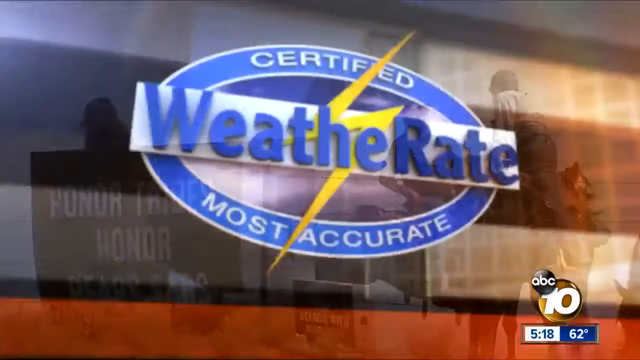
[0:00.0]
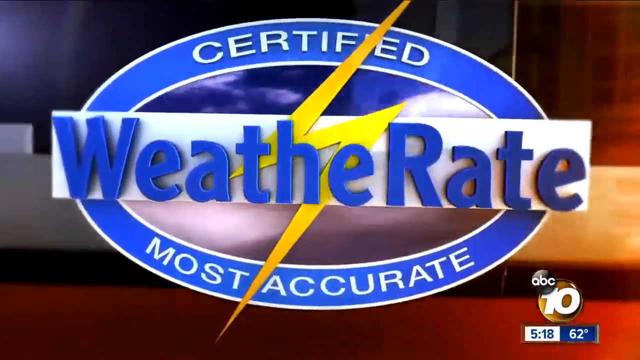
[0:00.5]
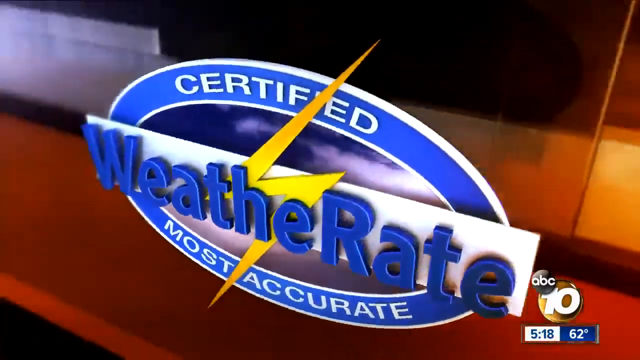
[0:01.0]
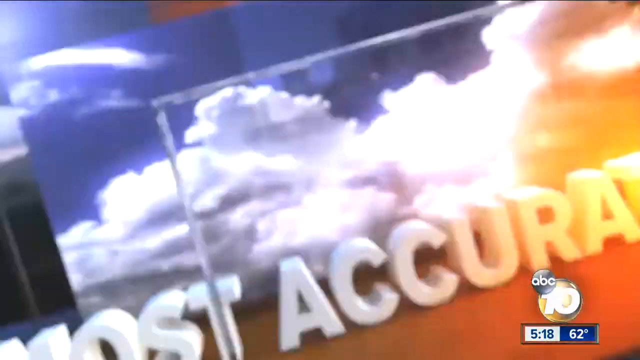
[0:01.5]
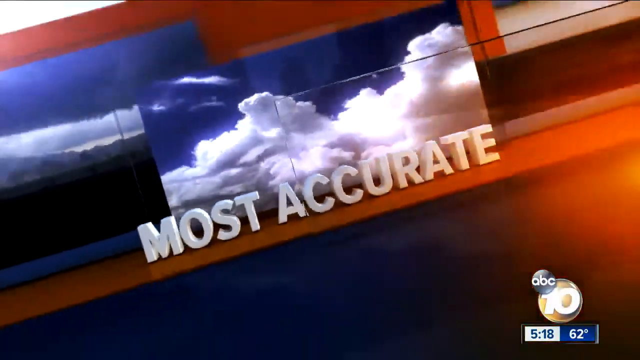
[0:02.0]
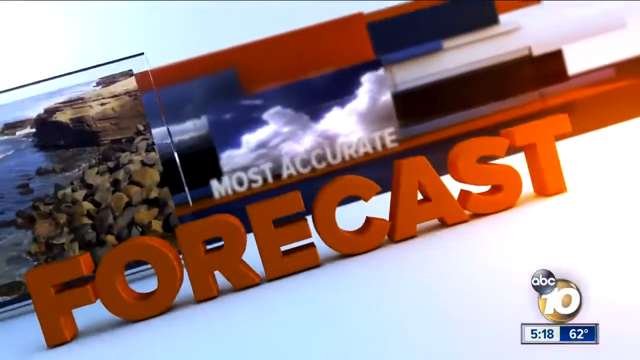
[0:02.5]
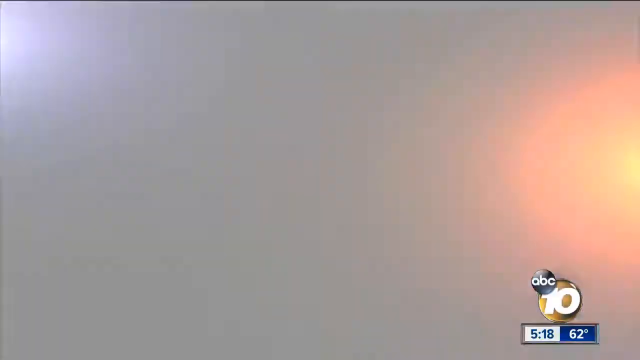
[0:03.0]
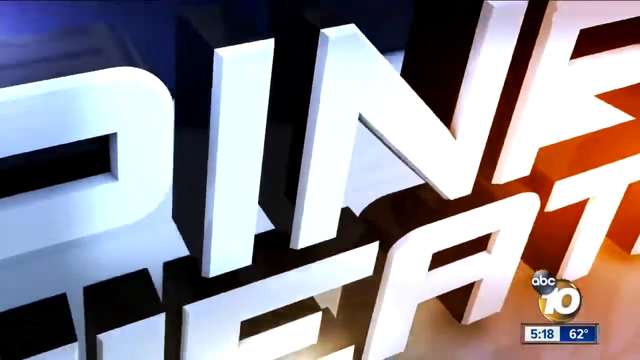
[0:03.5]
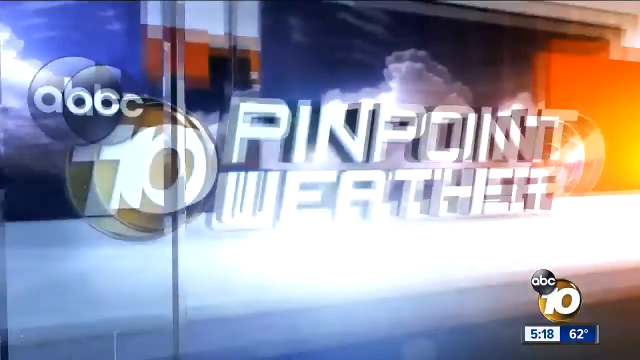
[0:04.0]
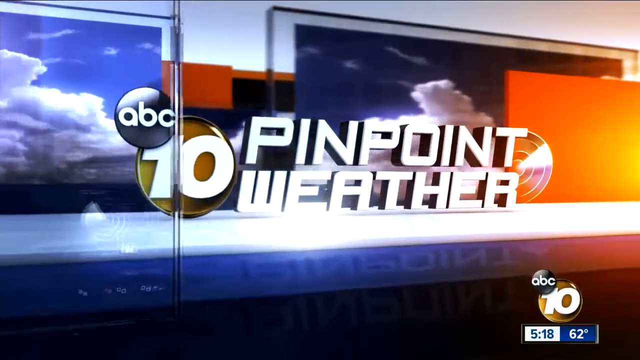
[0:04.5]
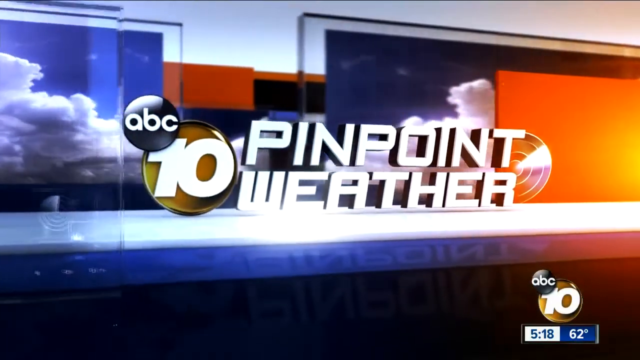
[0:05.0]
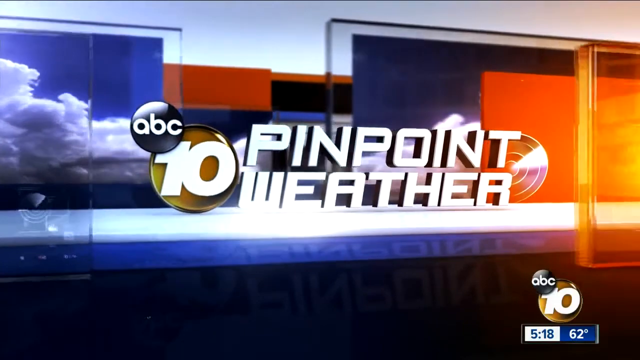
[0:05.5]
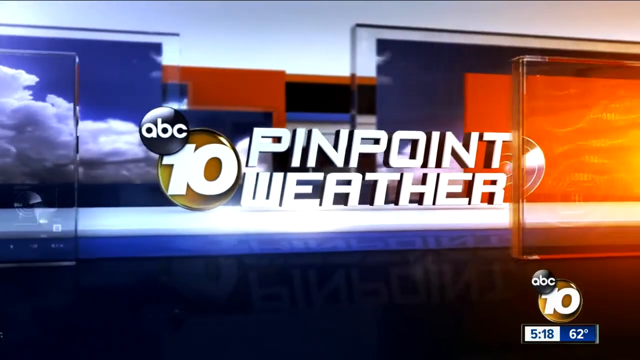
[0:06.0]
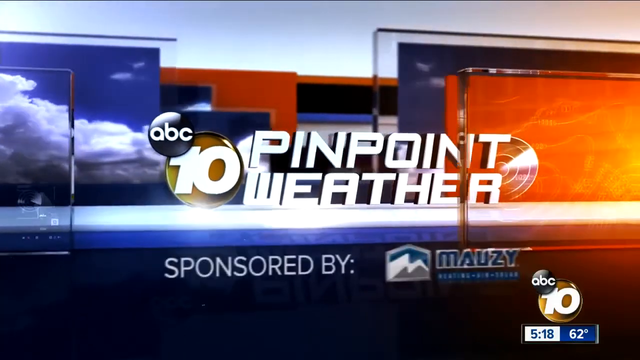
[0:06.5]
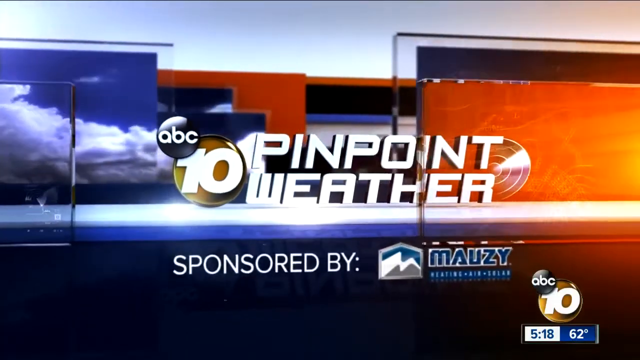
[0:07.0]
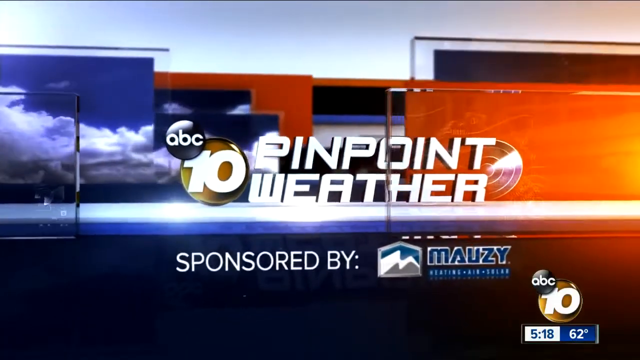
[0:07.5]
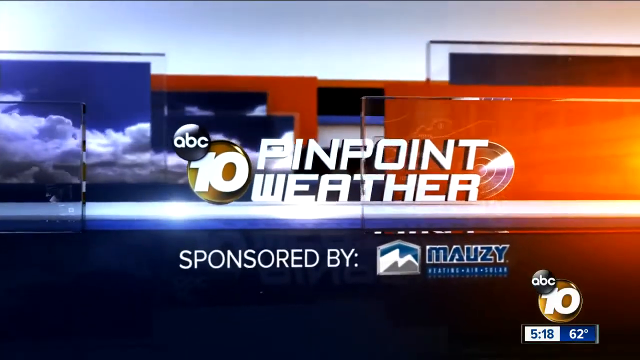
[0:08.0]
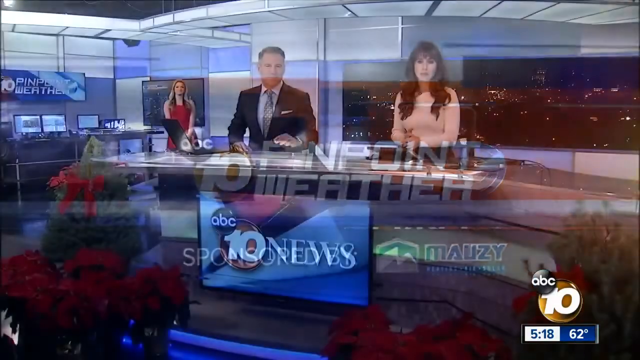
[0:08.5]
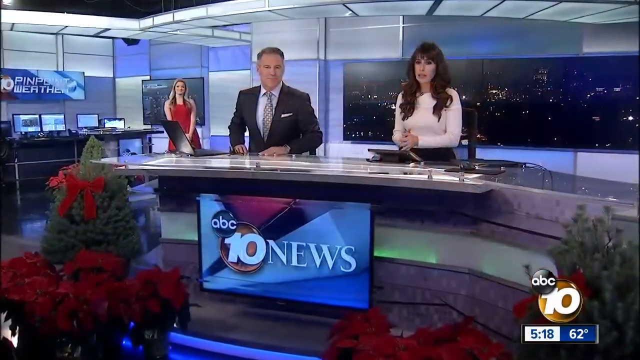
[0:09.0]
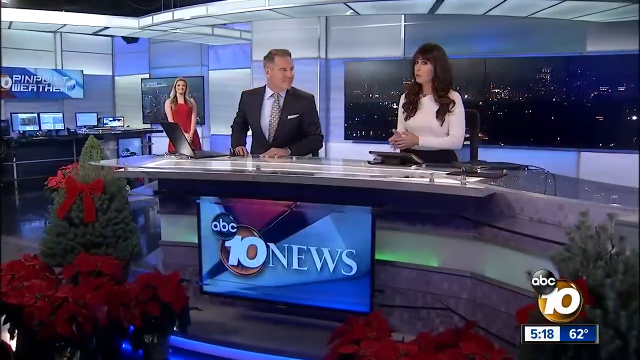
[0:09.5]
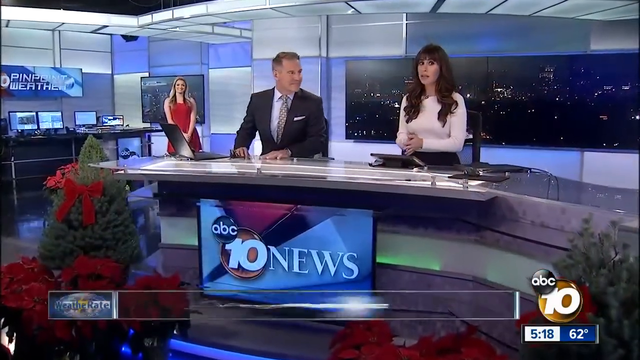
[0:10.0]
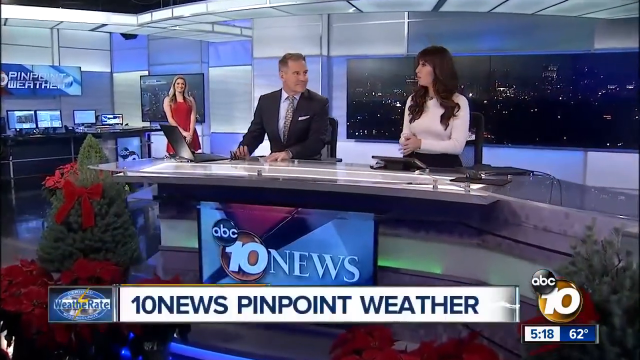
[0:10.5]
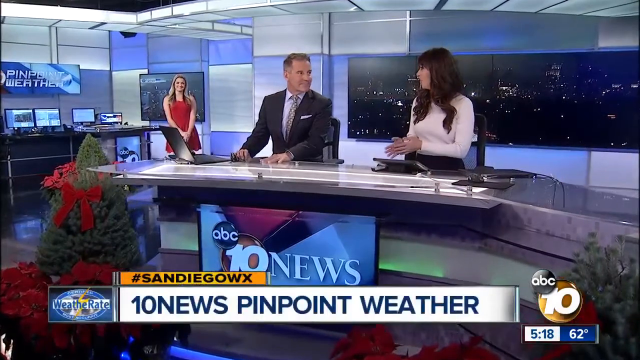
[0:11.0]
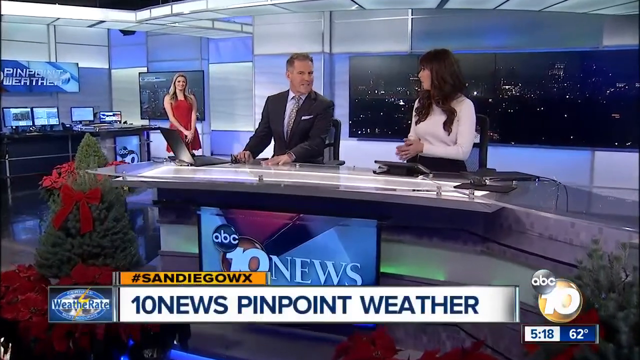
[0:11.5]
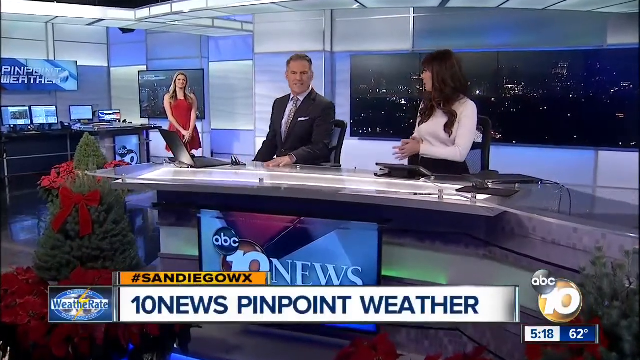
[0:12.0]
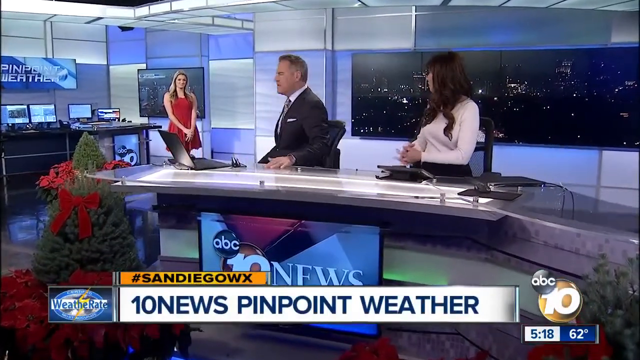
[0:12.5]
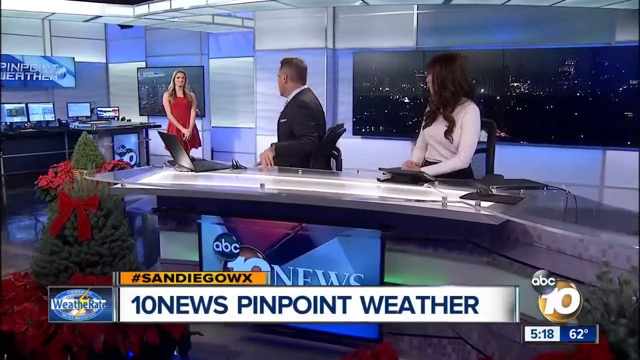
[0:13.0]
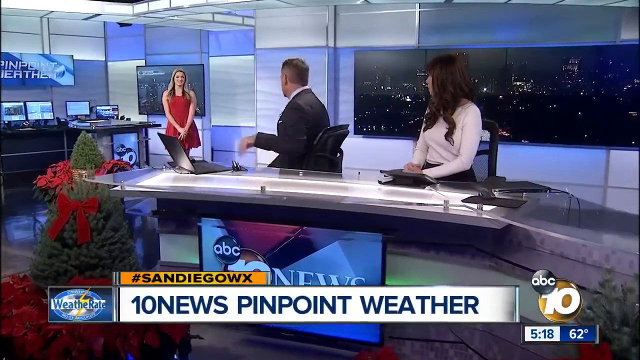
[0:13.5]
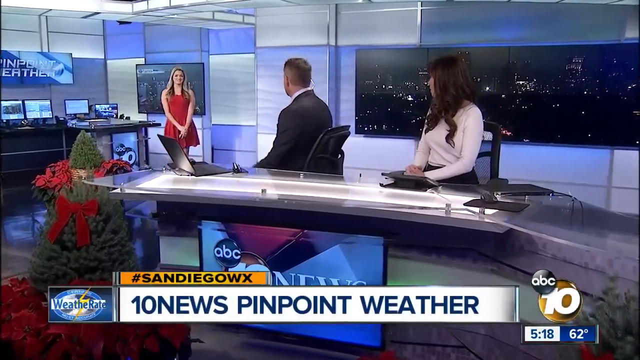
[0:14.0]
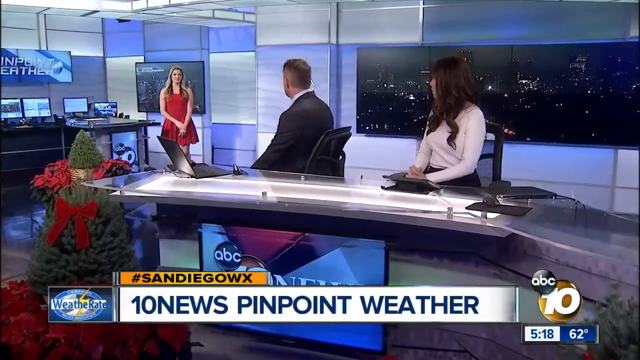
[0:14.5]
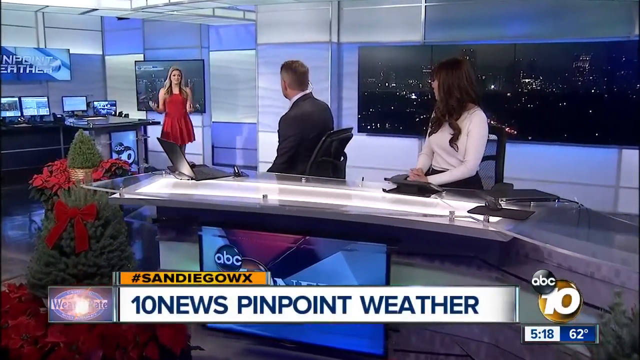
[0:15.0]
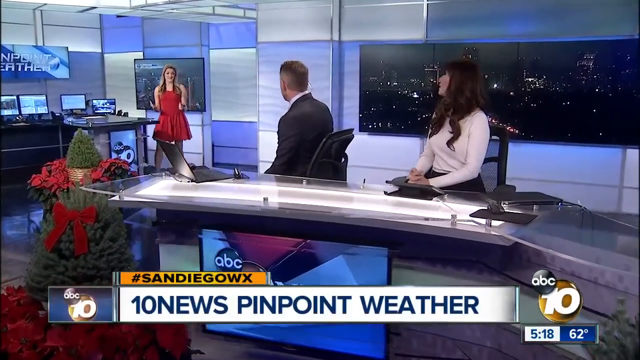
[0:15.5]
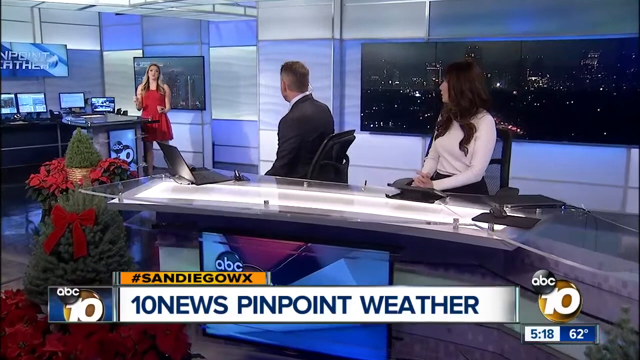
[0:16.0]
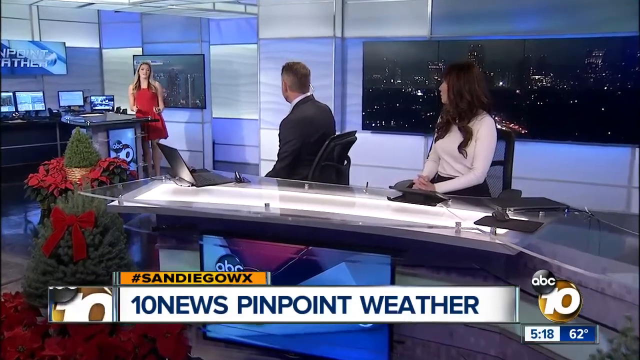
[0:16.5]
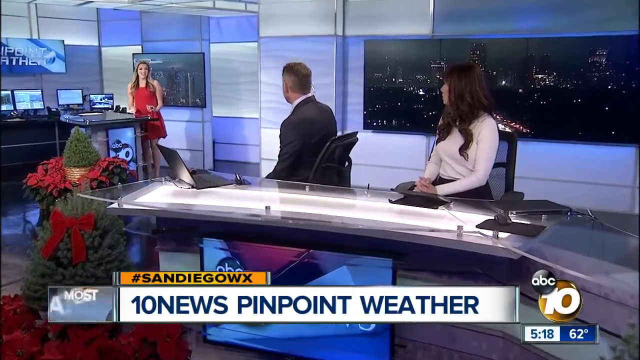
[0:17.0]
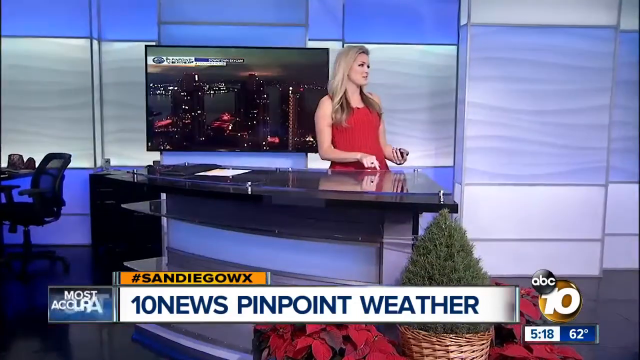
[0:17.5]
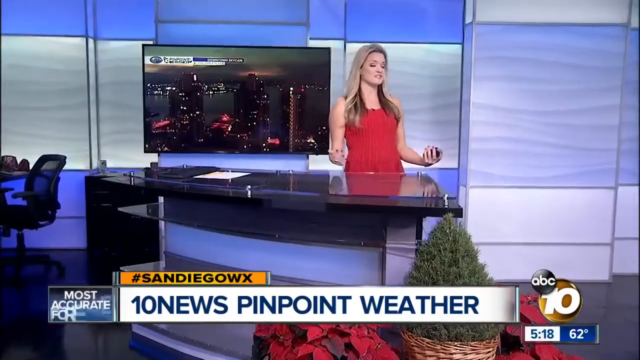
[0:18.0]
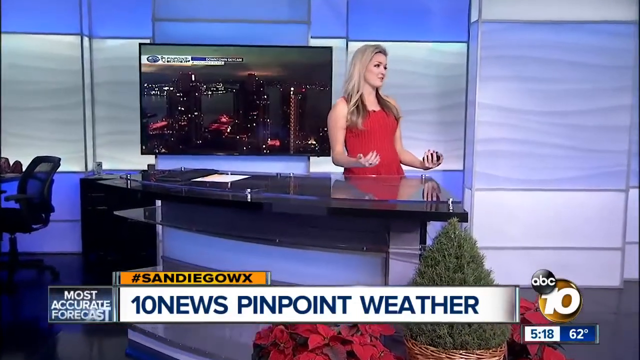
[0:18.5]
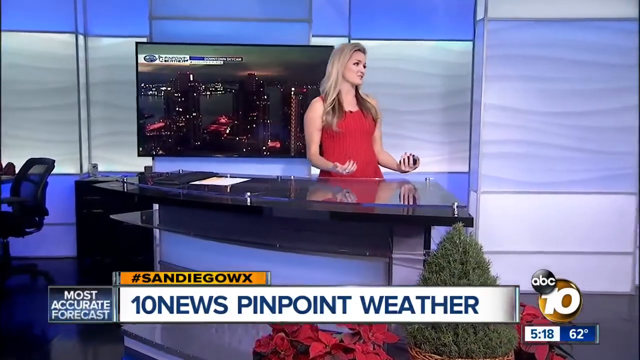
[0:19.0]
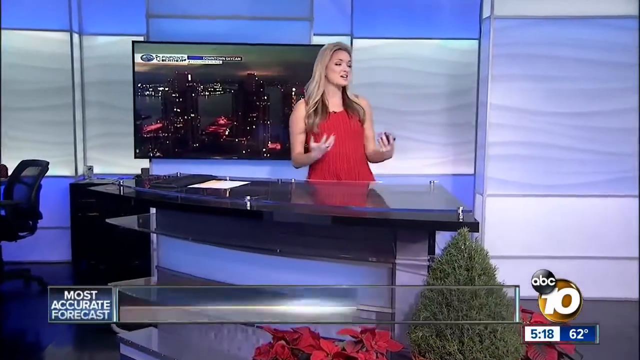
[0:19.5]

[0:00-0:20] This news show is from an ABC local channel 10, and it opens with lots of flying logos, colors and things moving all around. The first logo is a blue oval; the blue band of the oval reads "certified most accurate," and a white band across its center reads "weather rate" in blue, with a lightning bolt going through the middle. The logo flies around and off the screen, and diagonal text appears reading "forecast" in red all caps, with small white text on top reading "most accurate." Another big graphic comes in with "pinpoint weather" in white caps, a white 10 in a circle to its left, and a small black ABC circle with lowercase "abc" inside, over a background with lots of blue and red. The scene then switches to the newscasters, with "10 news pinpoint weather" in dark-blue all caps in a white text box at the bottom. A man and a woman are sitting at a desk, and another woman, apparently the weather woman, is to the left. The woman on the right wears a long-sleeved shirt and has long dark hair with bangs. The man on the left wears a dark suit with a white handkerchief peeking out and a light blue or white button-down shirt with a patterned tie that looks like white and black stripes, and he has short, somewhat grayish hair. It appears to be Christmas time: a mini Christmas tree is in the lower left. A nighttime cityscape is in the background of their desk, and a TV screen below them reads "this is ABC 10 news." The two turn and look at the woman in red on the left, and the shot switches to her.